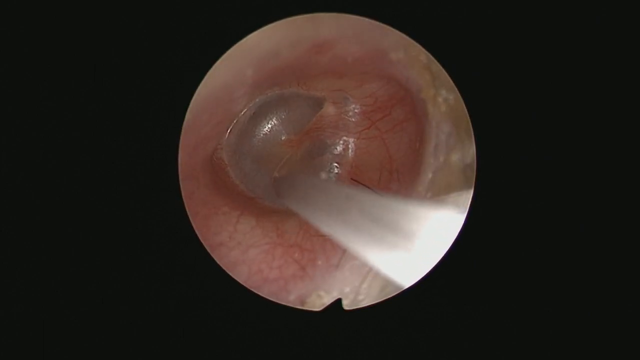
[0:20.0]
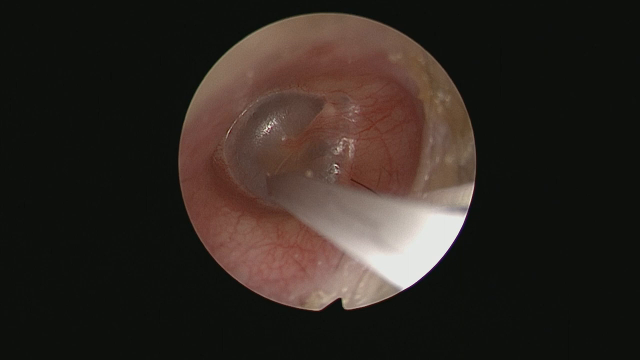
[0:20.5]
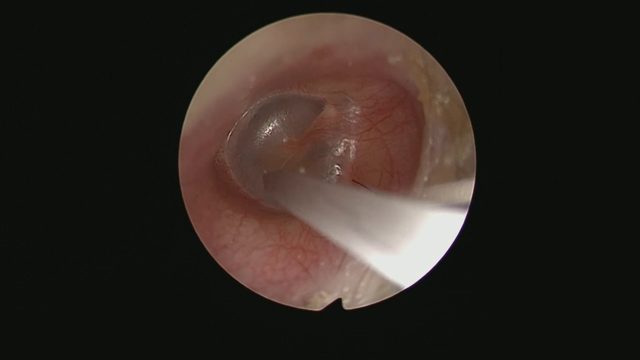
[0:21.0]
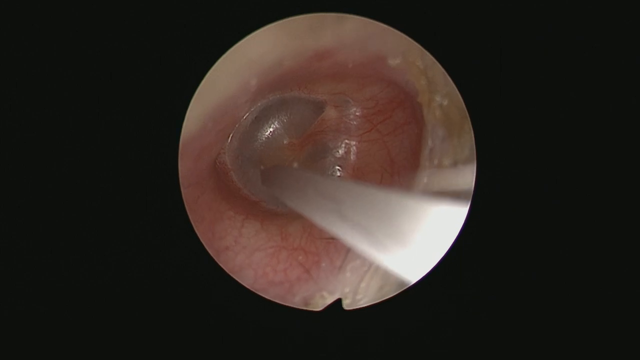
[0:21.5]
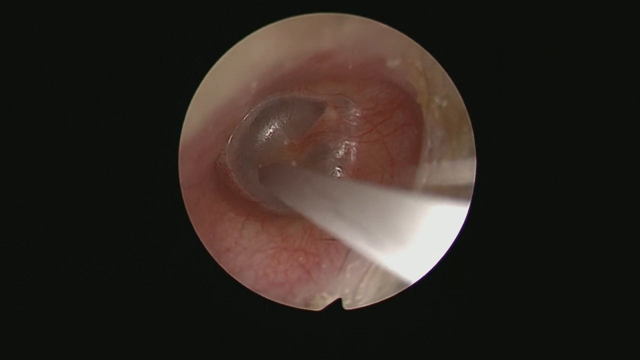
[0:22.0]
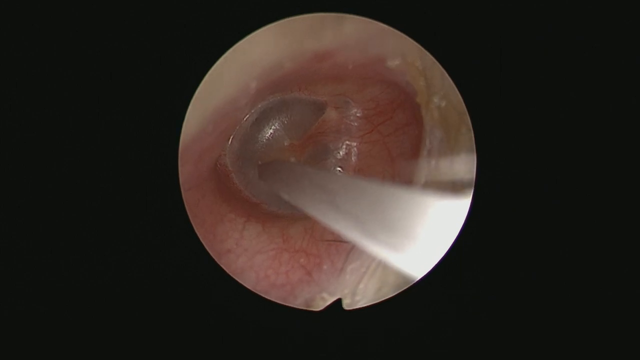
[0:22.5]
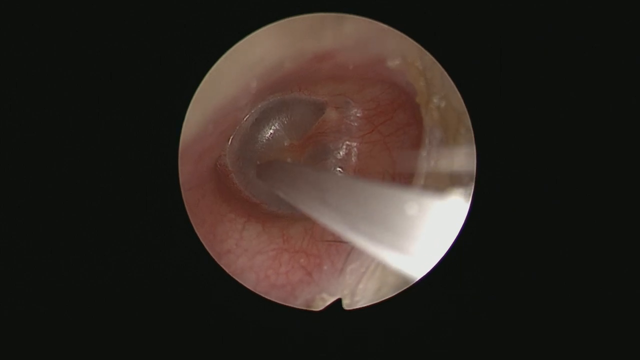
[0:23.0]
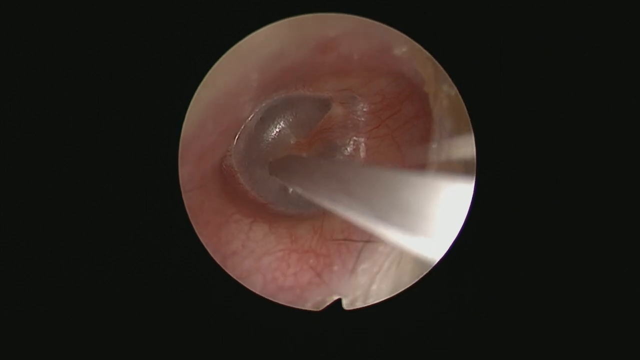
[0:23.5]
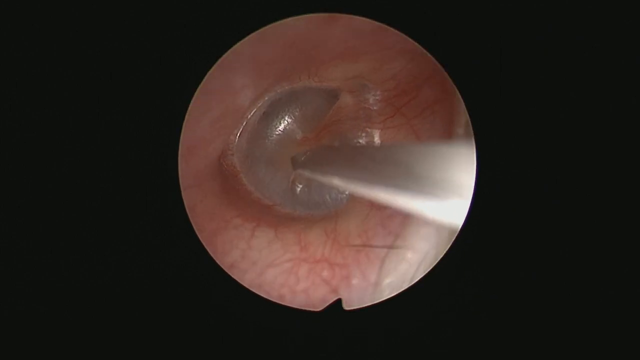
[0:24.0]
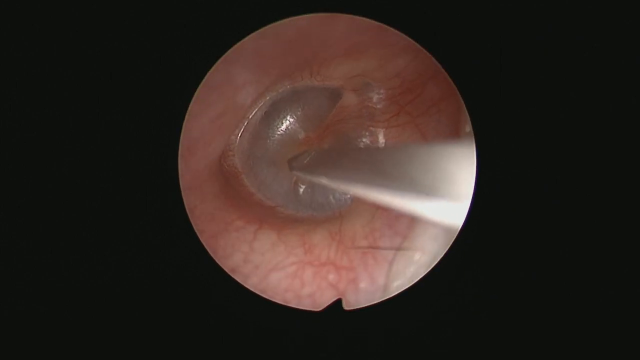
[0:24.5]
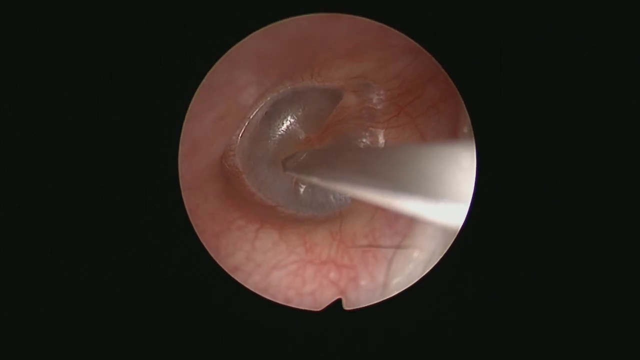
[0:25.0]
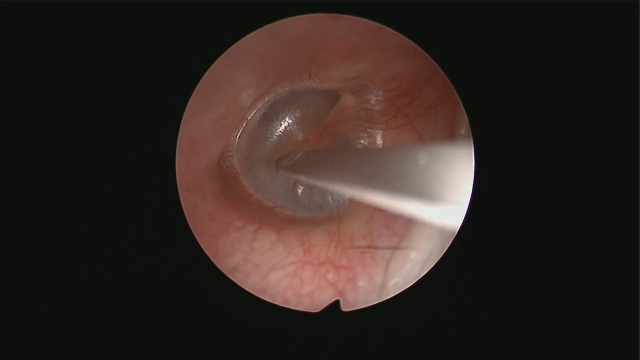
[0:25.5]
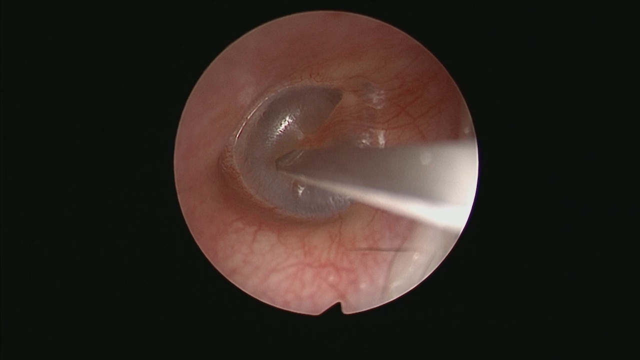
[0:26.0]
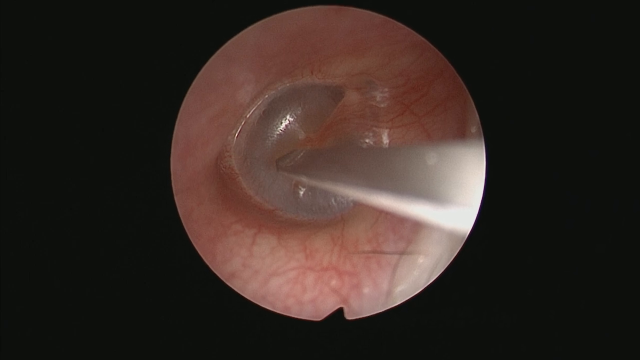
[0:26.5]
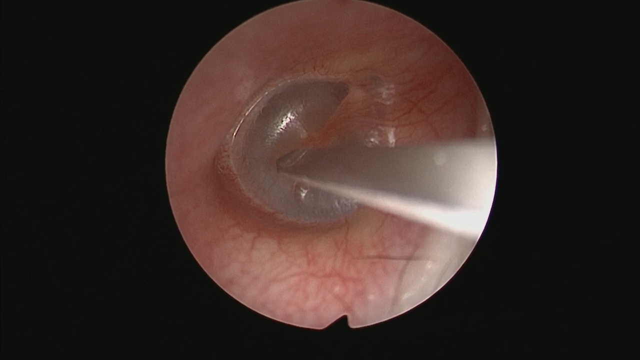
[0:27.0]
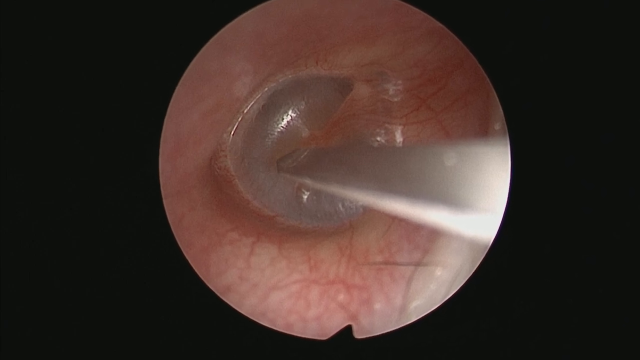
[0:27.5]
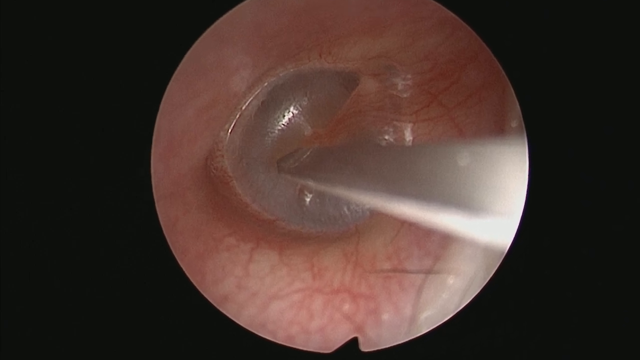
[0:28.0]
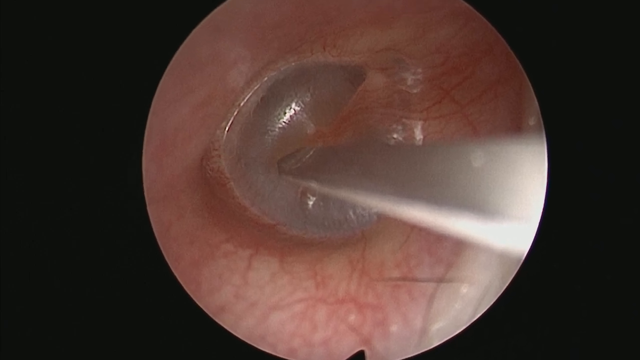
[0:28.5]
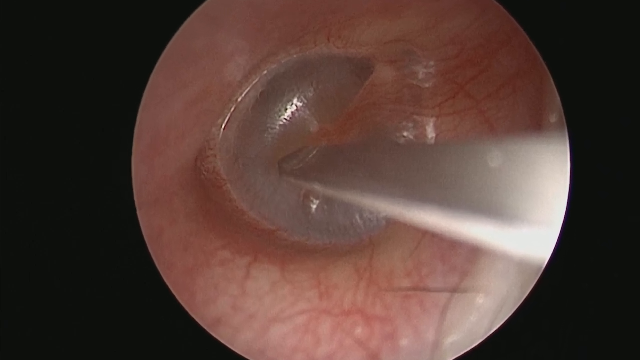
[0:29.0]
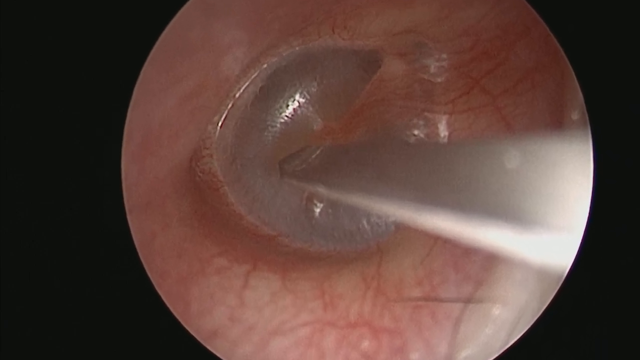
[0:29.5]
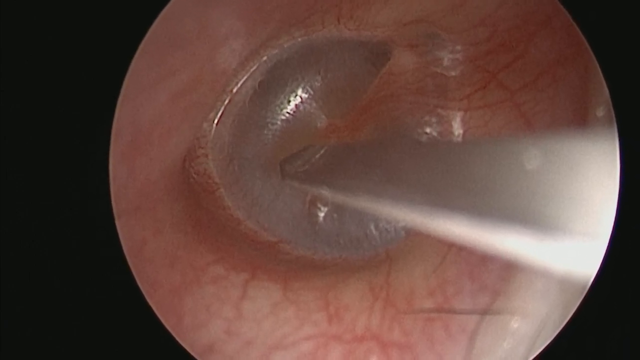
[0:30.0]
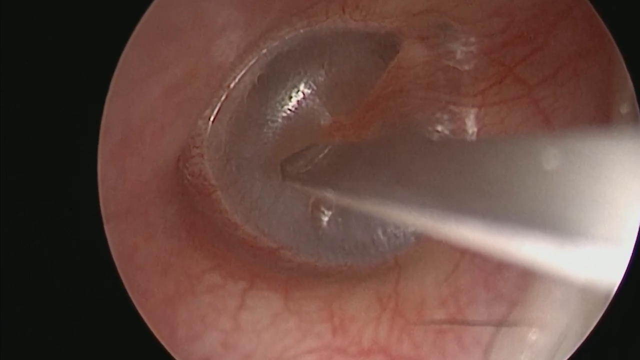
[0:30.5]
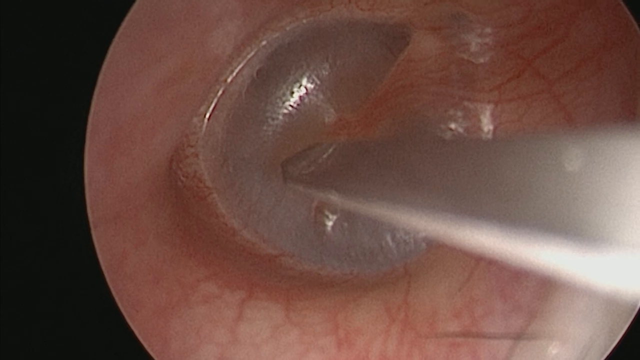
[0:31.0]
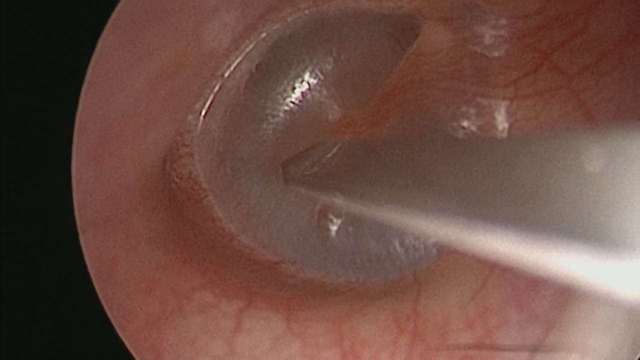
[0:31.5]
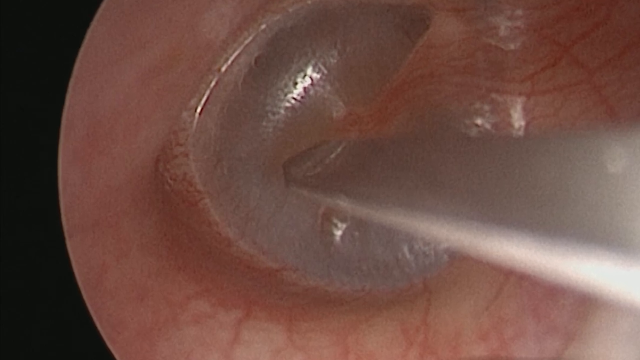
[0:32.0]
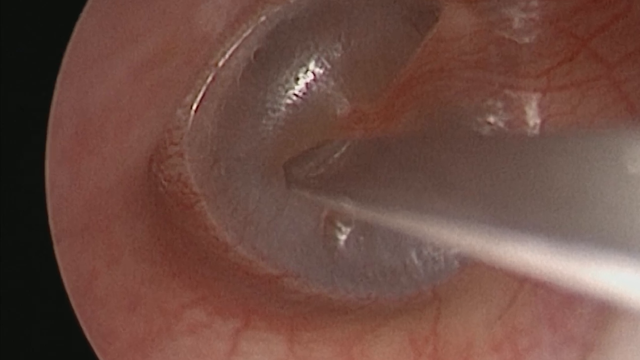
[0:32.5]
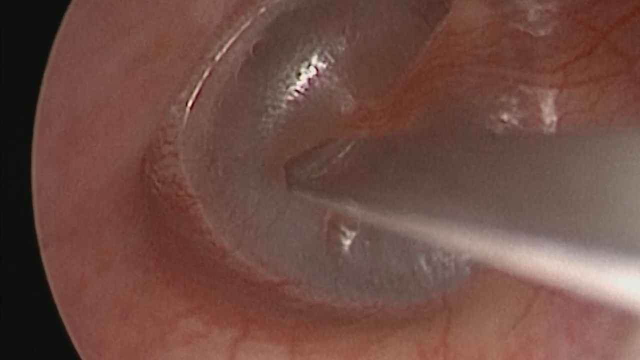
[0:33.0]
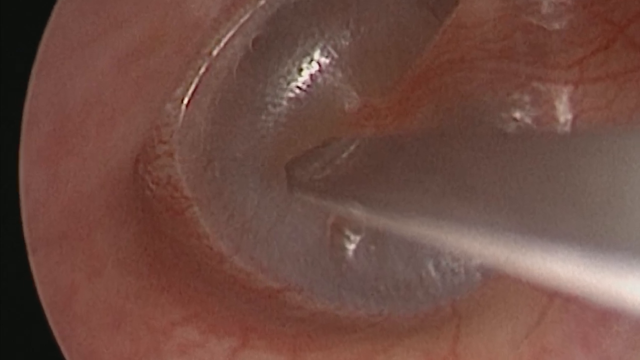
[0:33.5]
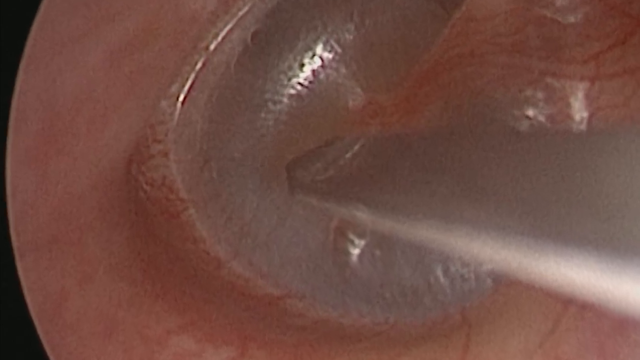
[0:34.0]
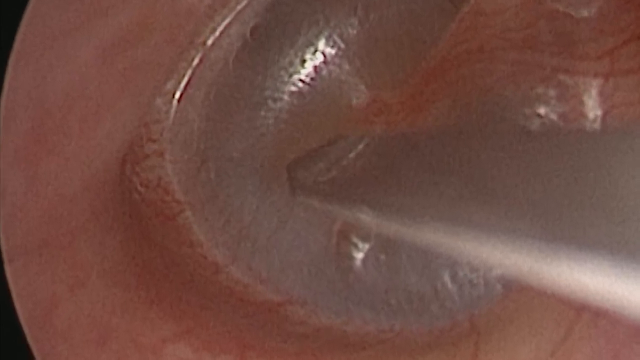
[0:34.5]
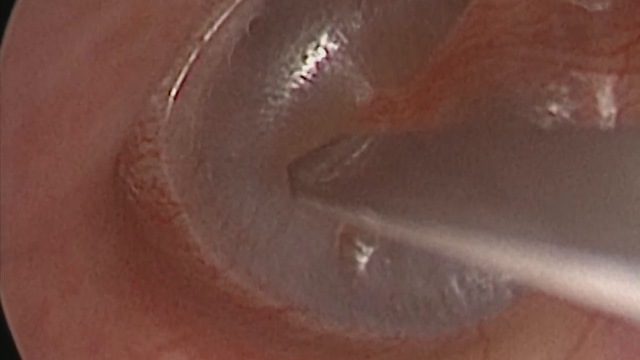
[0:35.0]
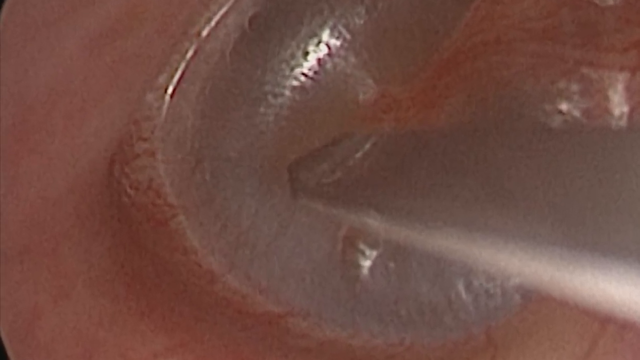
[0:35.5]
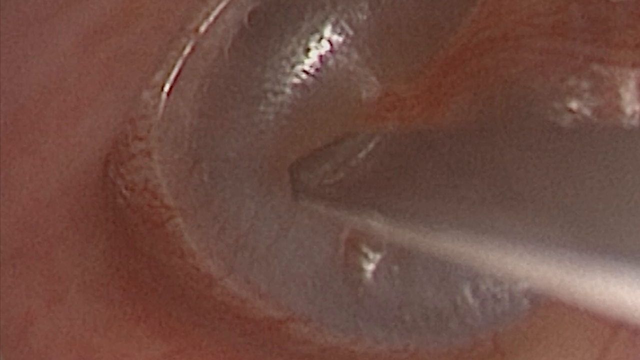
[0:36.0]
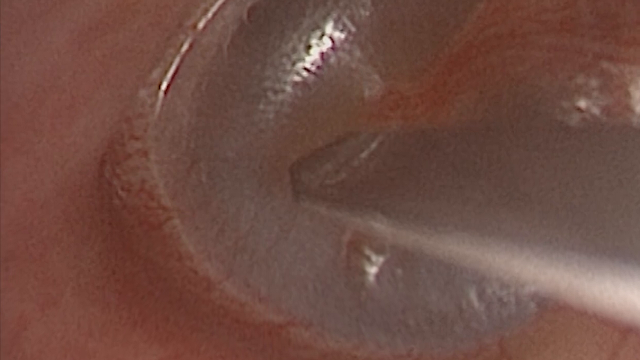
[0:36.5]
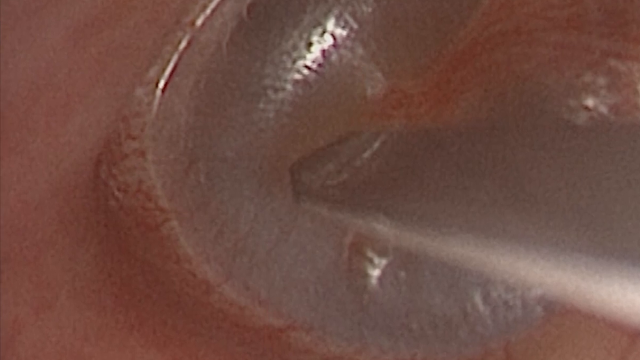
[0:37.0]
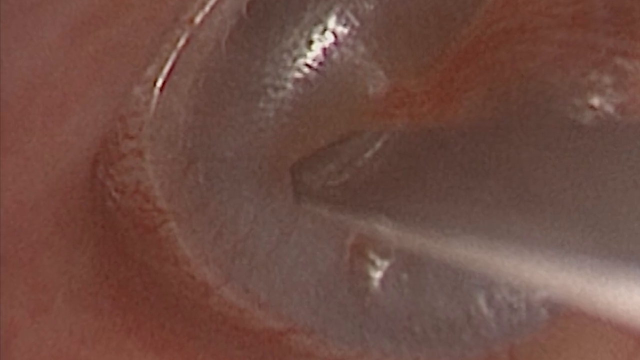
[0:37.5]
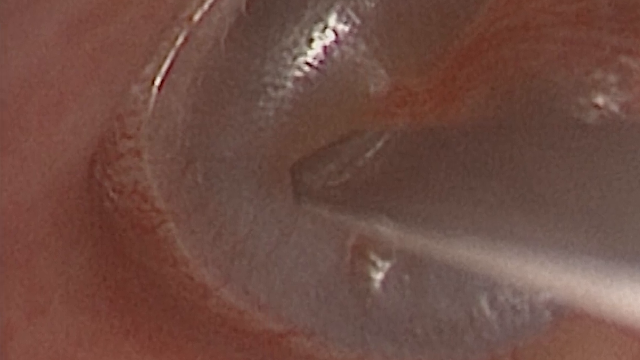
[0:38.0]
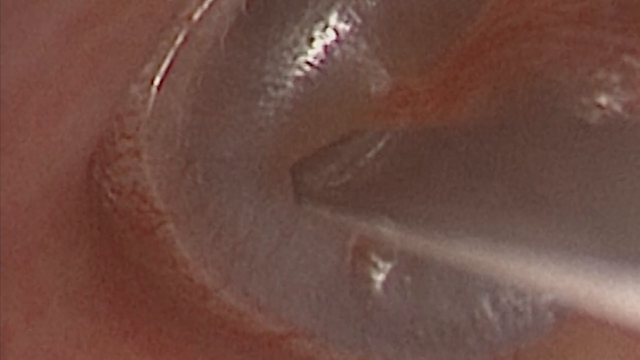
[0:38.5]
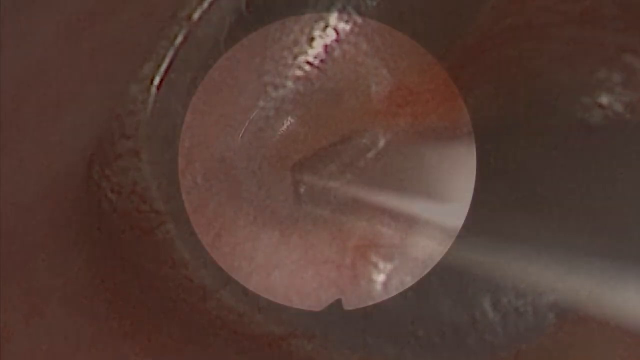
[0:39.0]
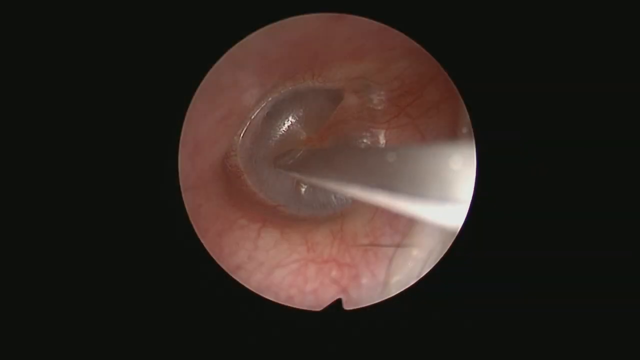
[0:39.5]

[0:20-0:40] A metal piece of equipment is inserted into the ear and touches the sack-like material. The camera zooms in very tight as the metal equipment continues touching it. Veins are visible in the ear. There appears to be almost a ring around the sack, possibly the points where the sack has attached itself to the body, and flesh appears to be attached to the sack. The camera moves very close, and through the sack additional flesh and veins can be seen. The camera continues to move in close and then freezes to show the detail of what the sack looks like.